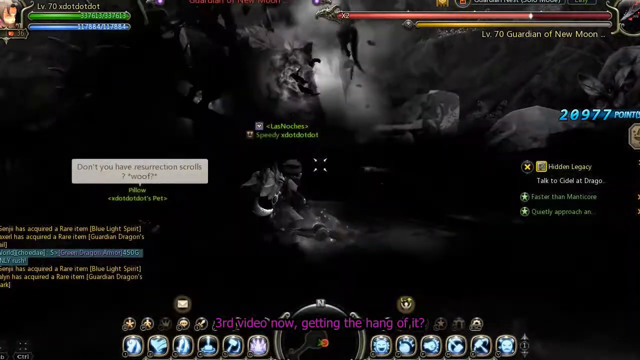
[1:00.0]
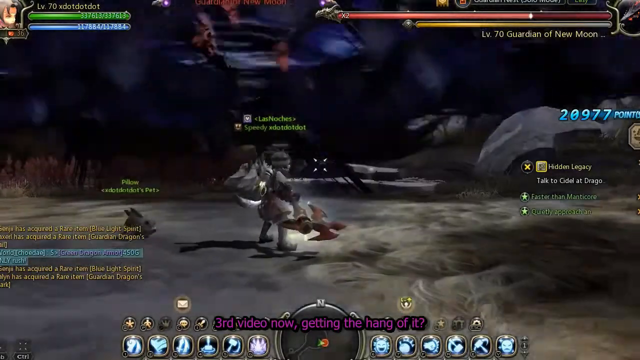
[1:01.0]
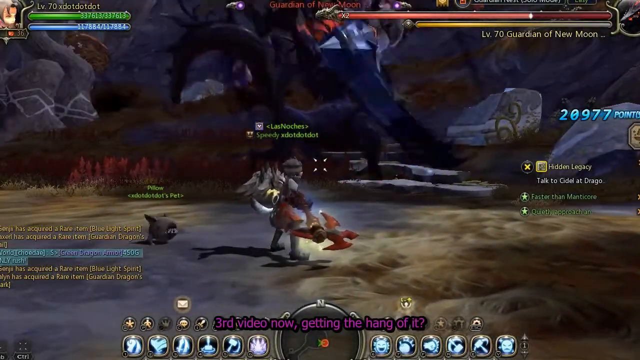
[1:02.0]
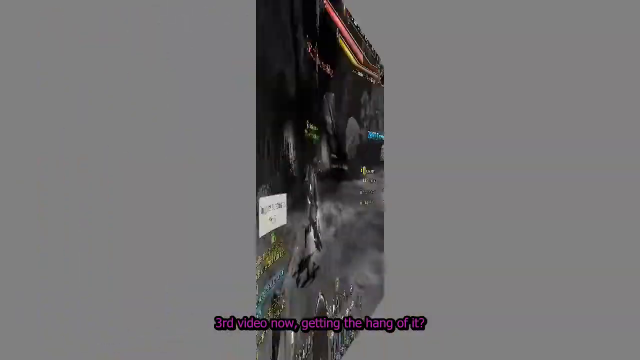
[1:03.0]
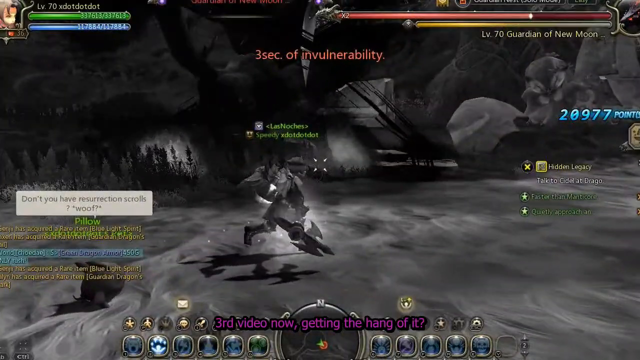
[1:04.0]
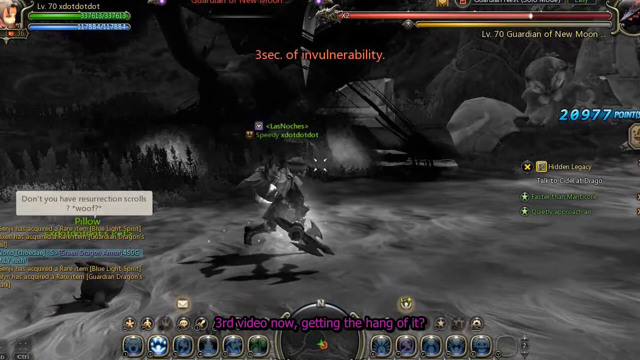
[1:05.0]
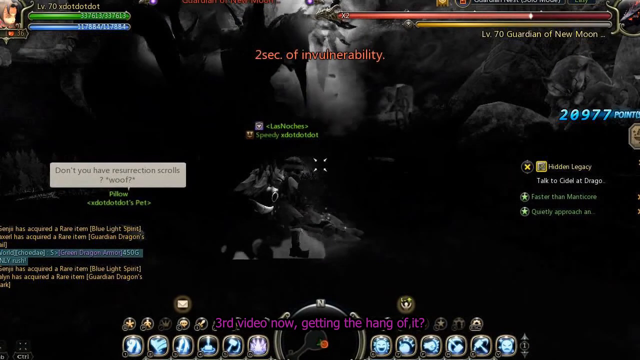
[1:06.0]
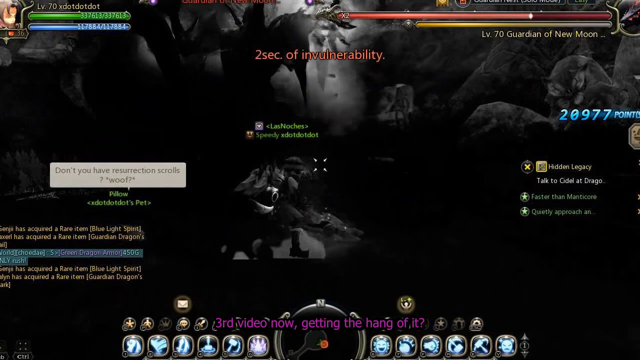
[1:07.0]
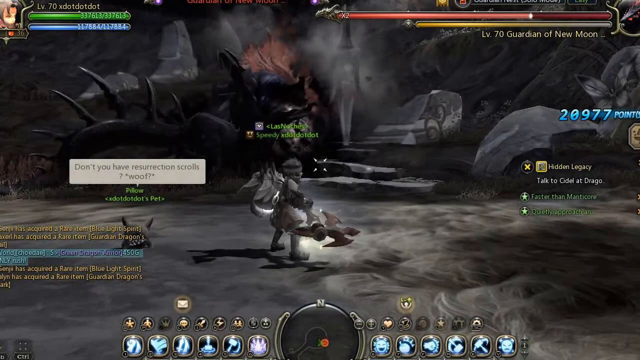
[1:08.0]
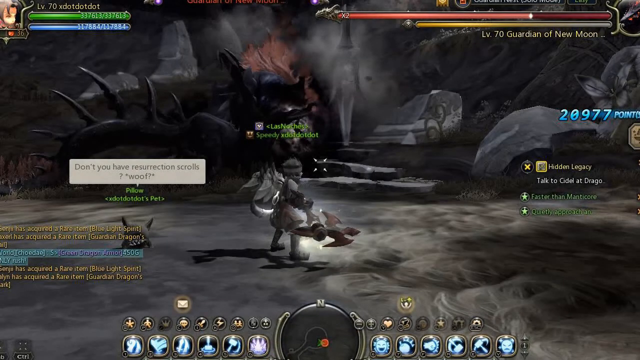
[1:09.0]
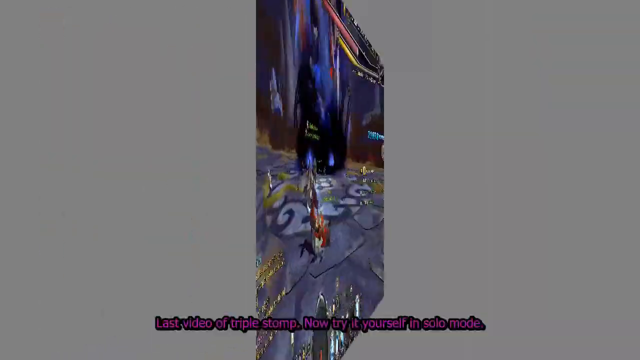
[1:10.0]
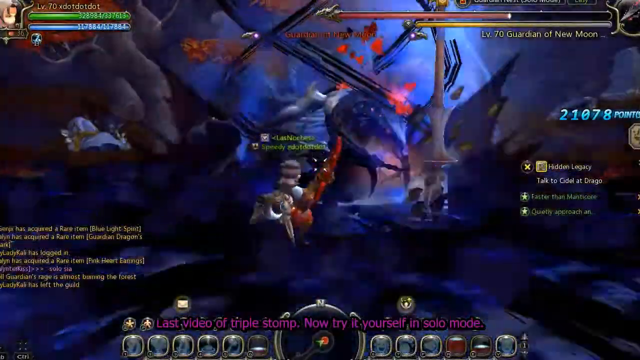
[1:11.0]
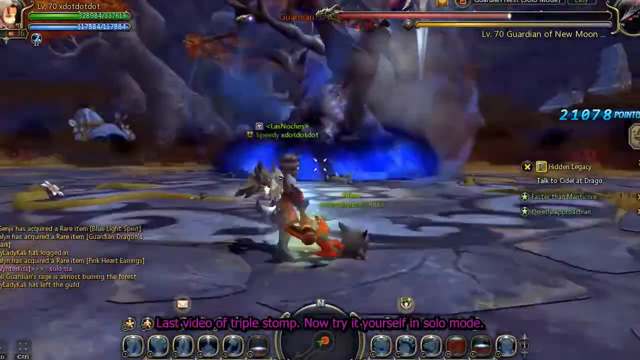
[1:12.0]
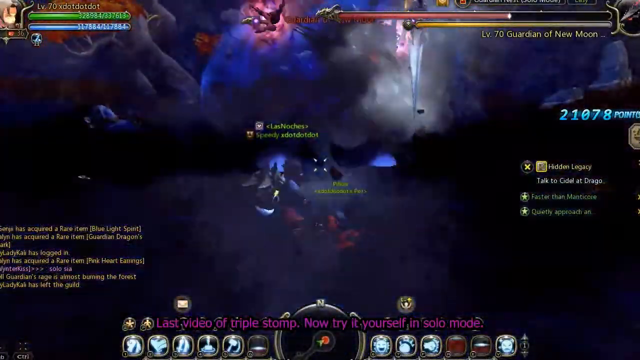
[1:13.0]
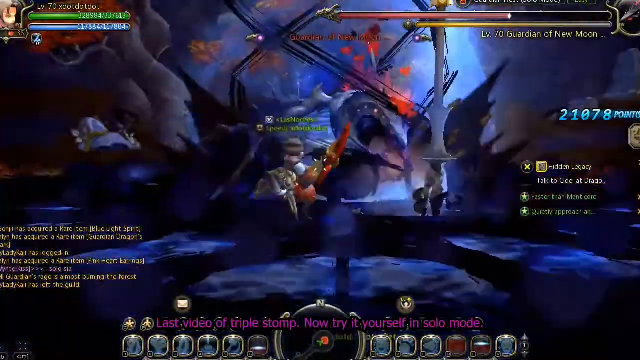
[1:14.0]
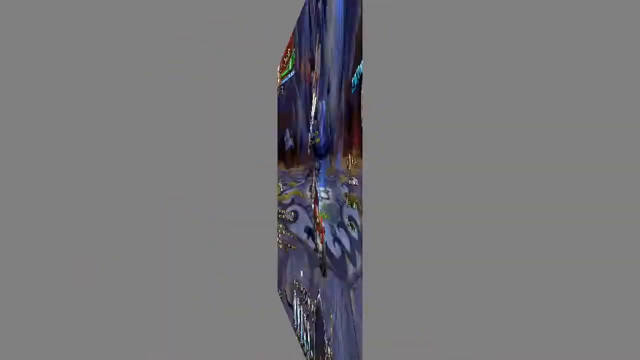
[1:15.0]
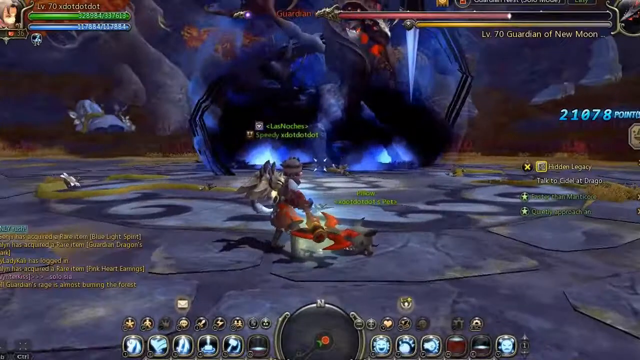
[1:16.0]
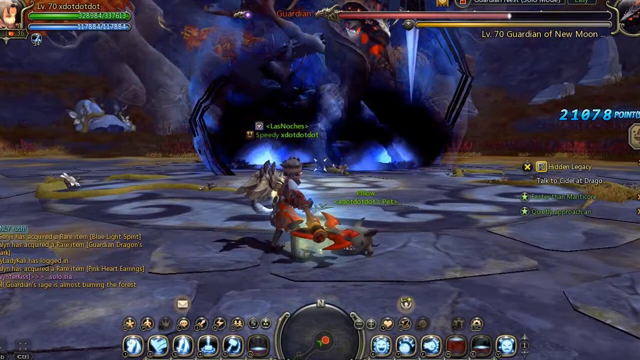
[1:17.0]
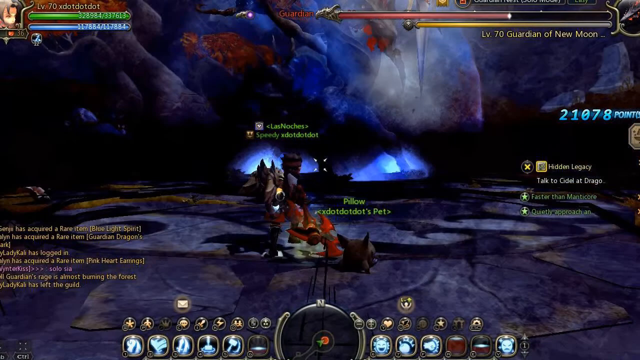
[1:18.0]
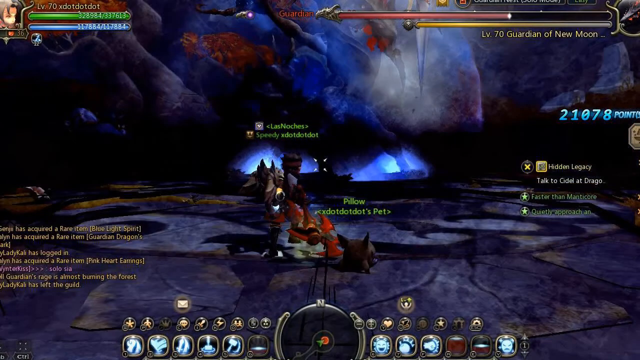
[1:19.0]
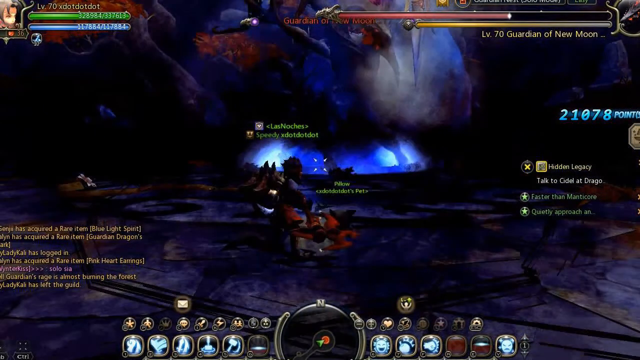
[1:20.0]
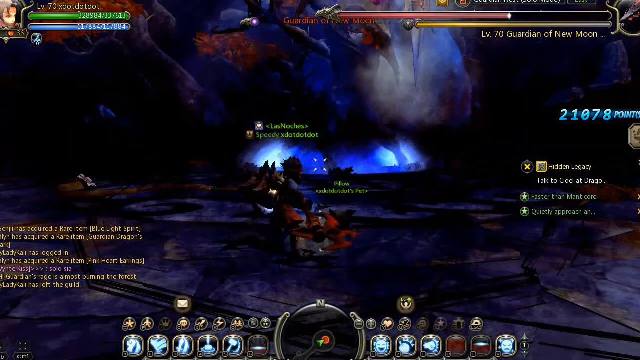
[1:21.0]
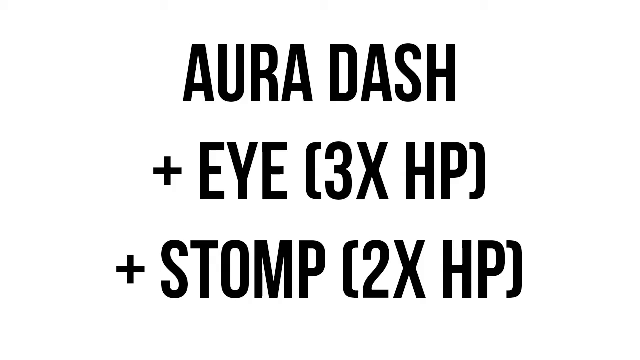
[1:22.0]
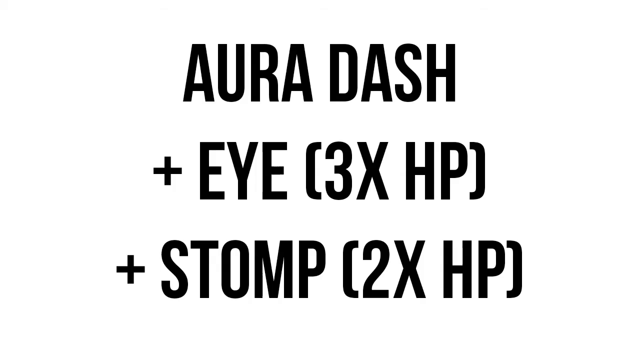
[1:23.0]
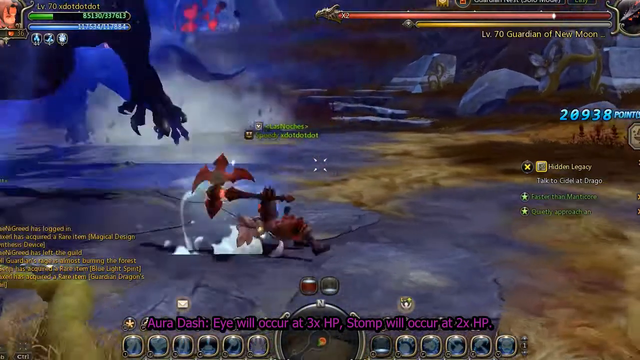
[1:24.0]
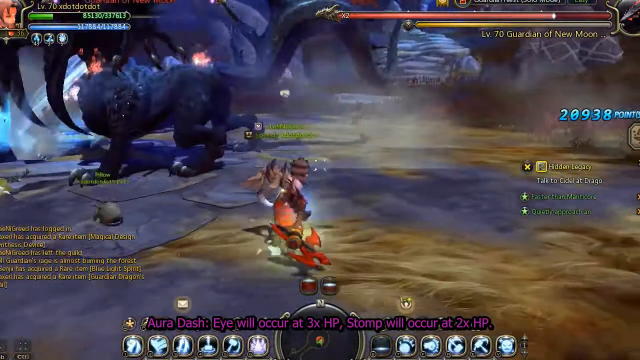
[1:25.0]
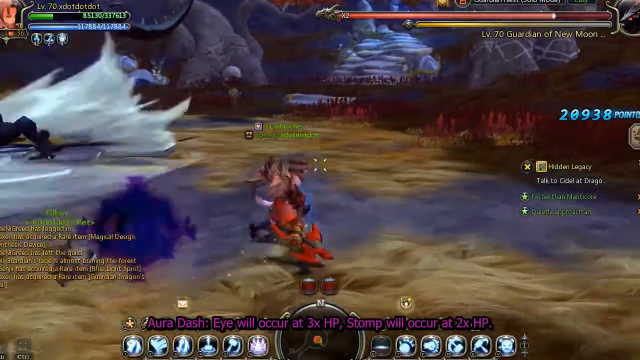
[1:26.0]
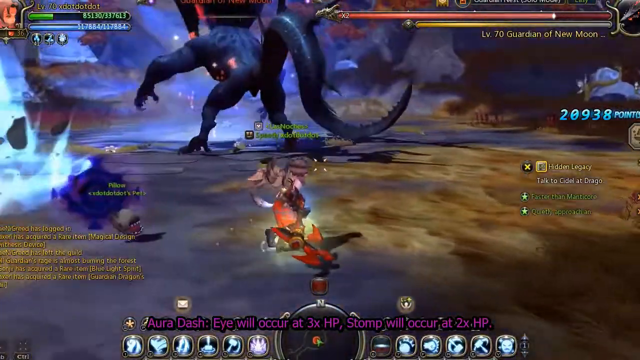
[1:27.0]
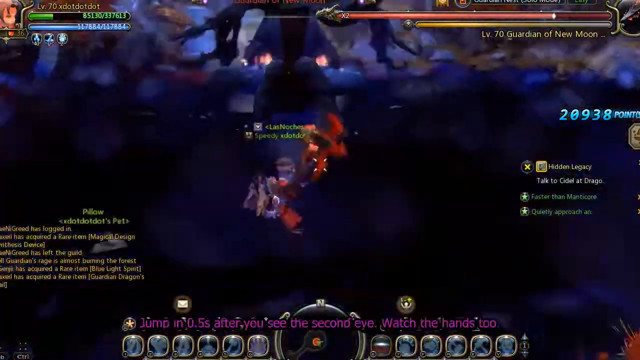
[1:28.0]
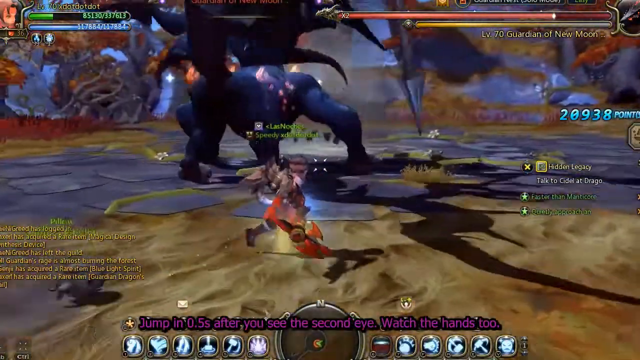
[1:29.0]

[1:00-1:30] The character is still battling the dragon. The action stops, and he says "don't you have resurrection skulls". The display still shows level 70 and Guardian of the New Moon, along with Las Noches, something beginning with "speedy", a points total of either 2,977 or 20,977, and two seconds of invulnerability. The fight resumes, and the character gets knocked down or something similar. Text in black on a white background appears, including "3x HP" and "stomp 2x HP". The graphics look cartoonish. Electricity comes out of the dragon's footsteps, and he appears mad.